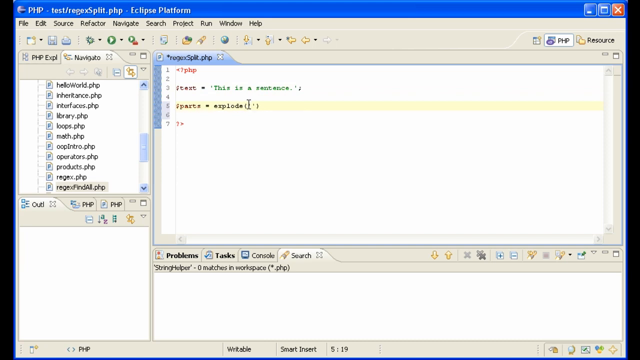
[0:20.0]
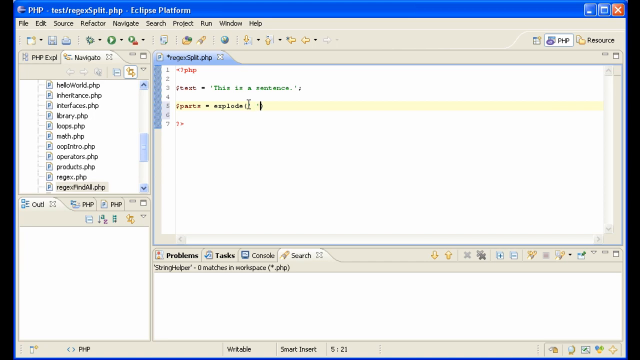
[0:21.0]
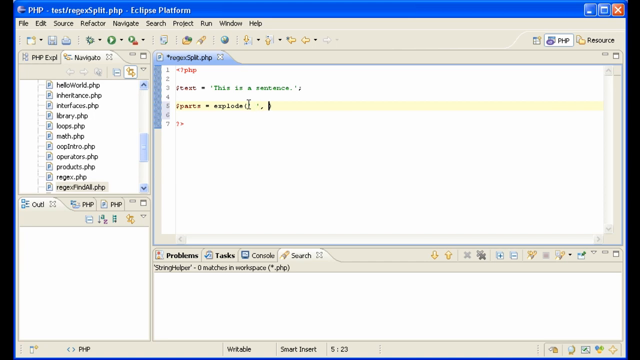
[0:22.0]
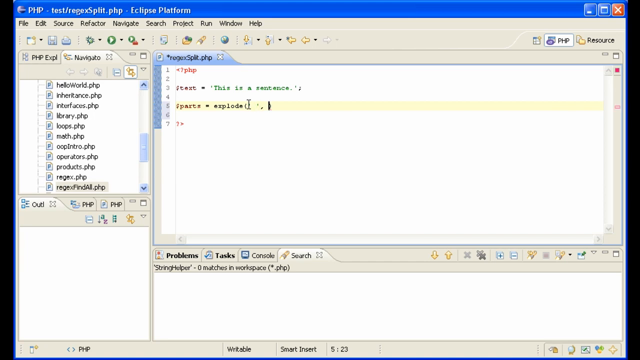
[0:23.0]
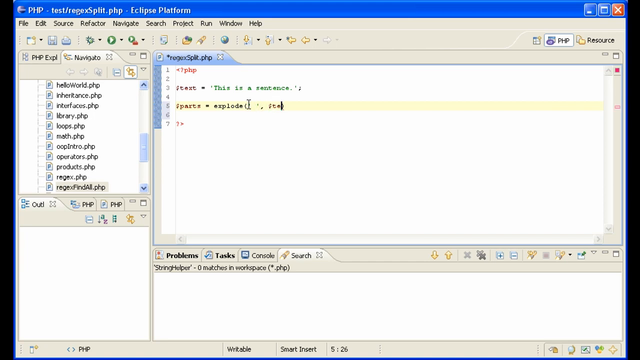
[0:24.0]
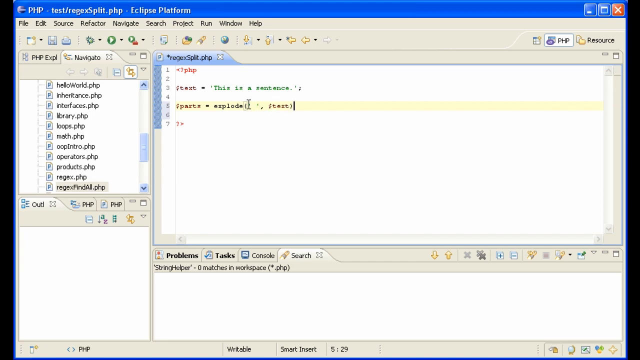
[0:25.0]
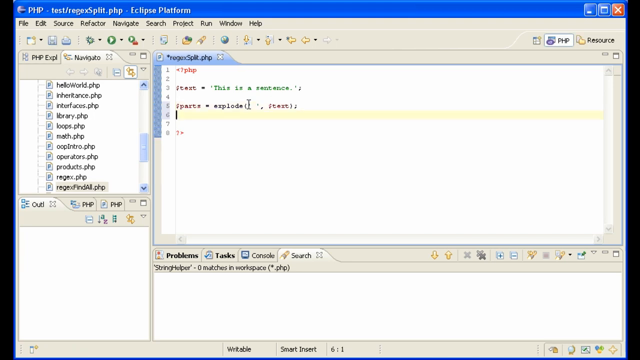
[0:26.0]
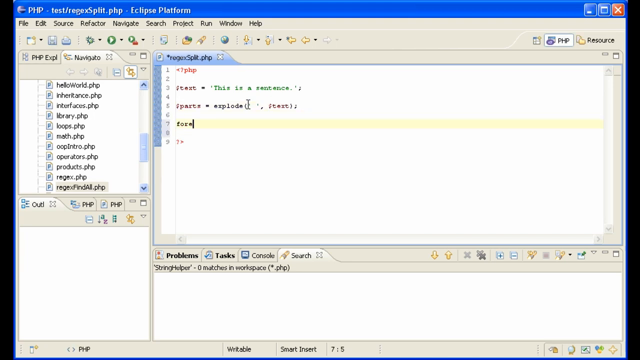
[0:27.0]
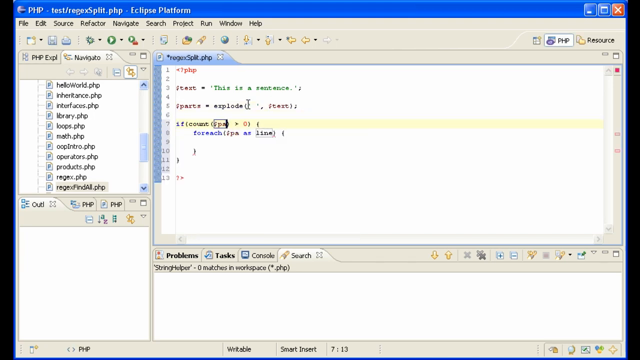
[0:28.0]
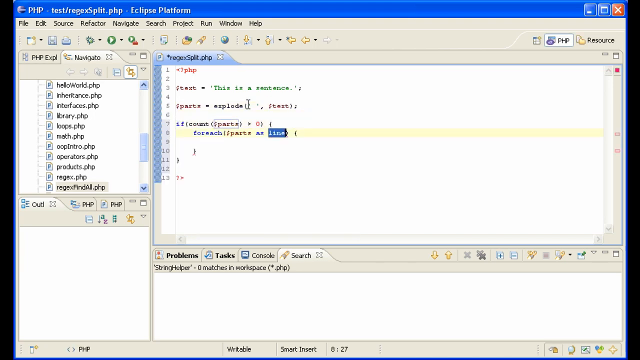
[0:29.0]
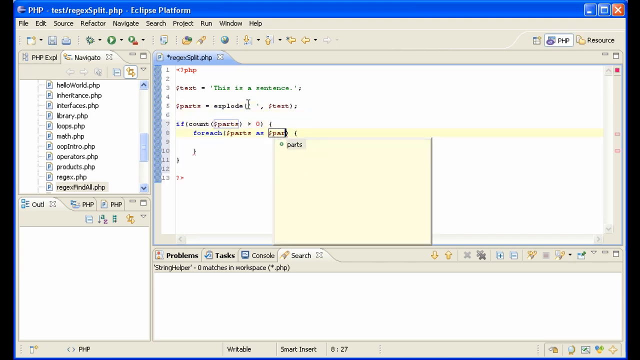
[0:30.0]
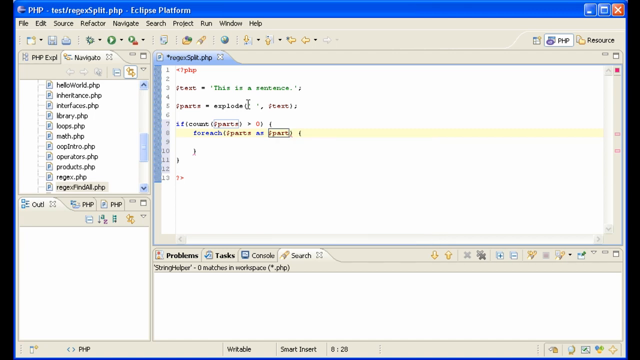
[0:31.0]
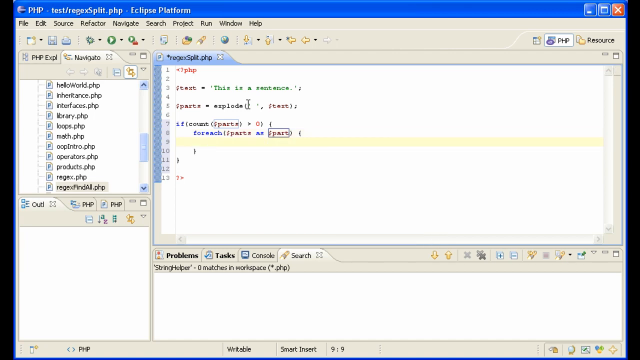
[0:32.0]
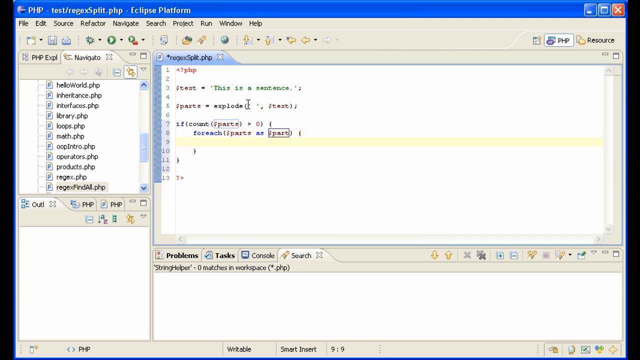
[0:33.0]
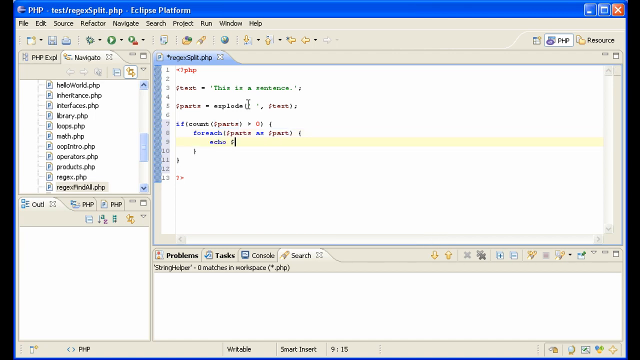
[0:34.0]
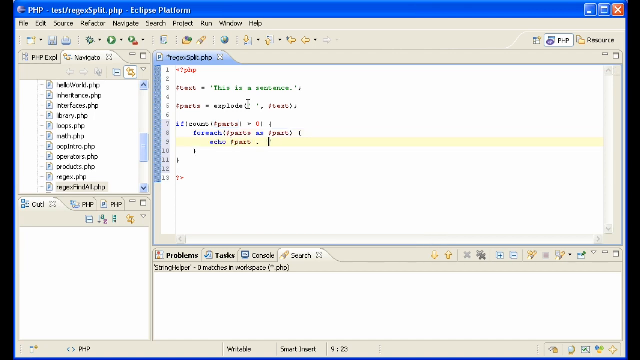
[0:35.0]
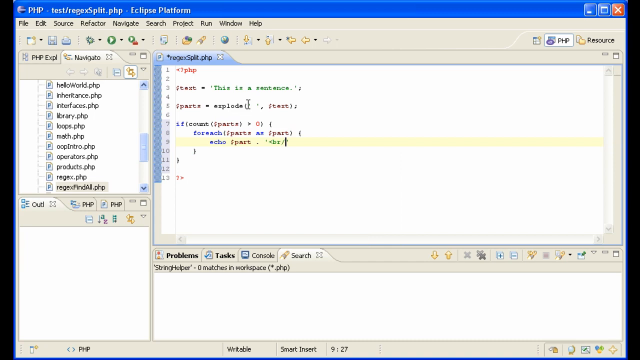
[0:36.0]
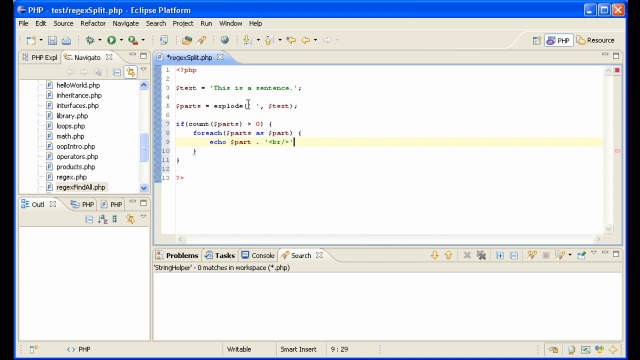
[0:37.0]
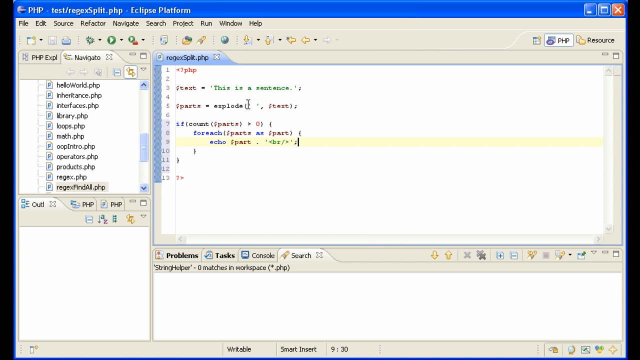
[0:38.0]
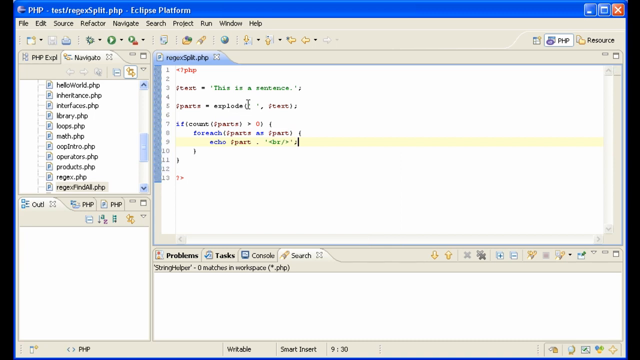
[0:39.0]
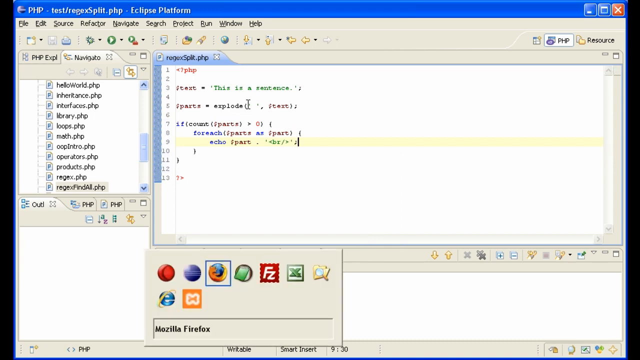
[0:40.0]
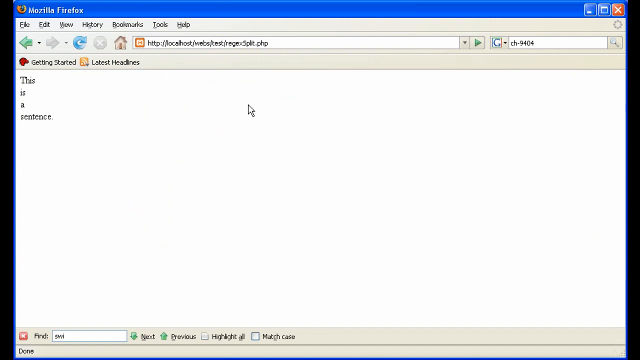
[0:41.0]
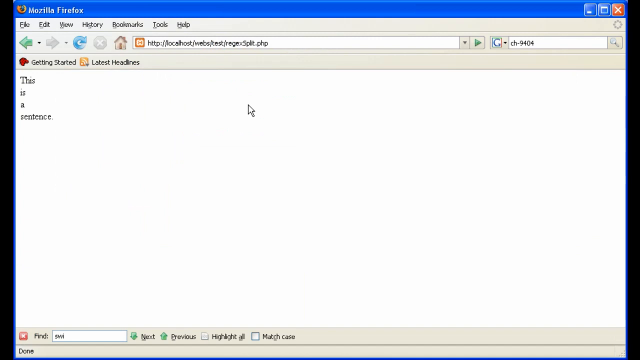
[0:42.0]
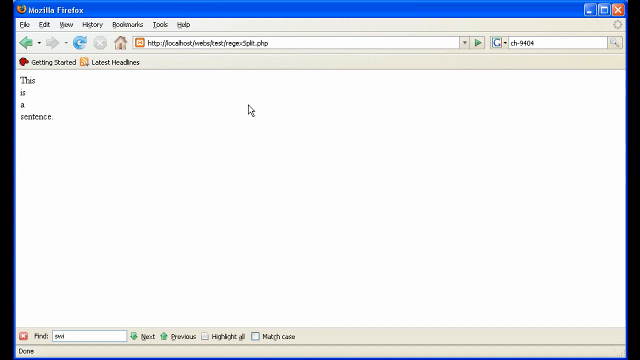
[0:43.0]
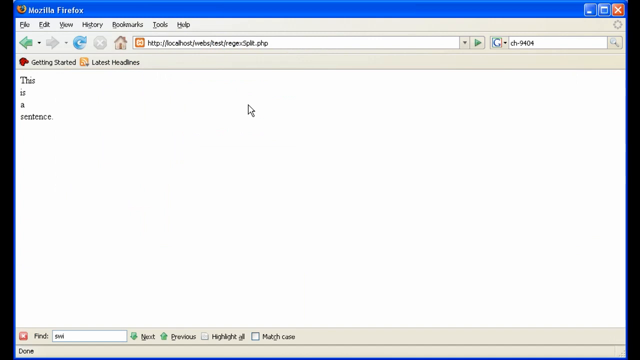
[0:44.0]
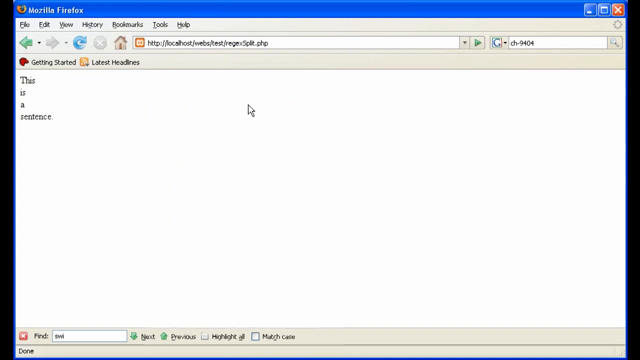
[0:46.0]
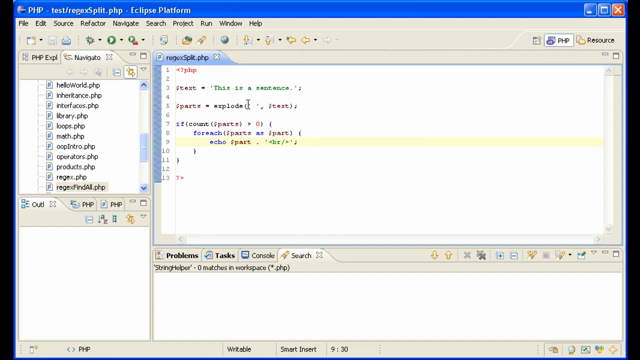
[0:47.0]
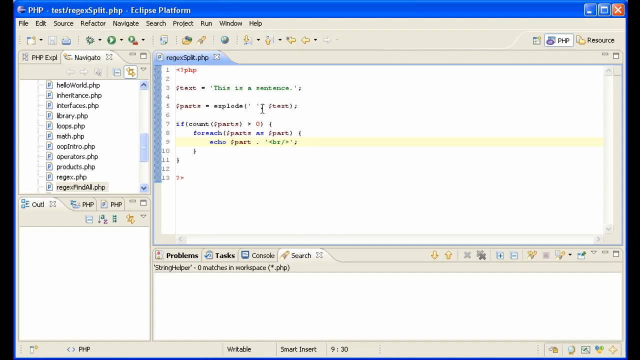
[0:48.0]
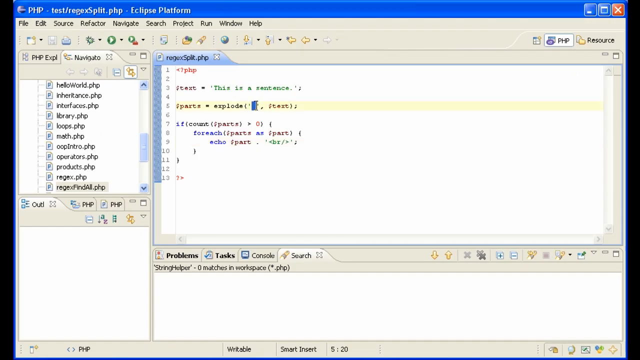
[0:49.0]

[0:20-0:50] The code continues: for the parts variable, explode is written with an open parenthesis, an empty space, and test inside. An if statement follows that counts the number of parts, and if it is more than zero, each part in parts is printed followed by a line break. Mozilla Firefox then opens in a new window, where the regex.php file is already running locally. The page is reloaded, and the output shows the sentence split into four lines, one word on each: "this is a sentence" becomes four lines. The view switches back to the Eclipse IDE, where the parts variable is highlighted, showing the empty space that determines where the sentence is broken up.